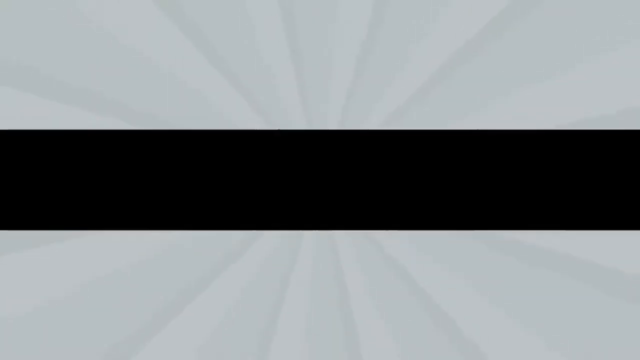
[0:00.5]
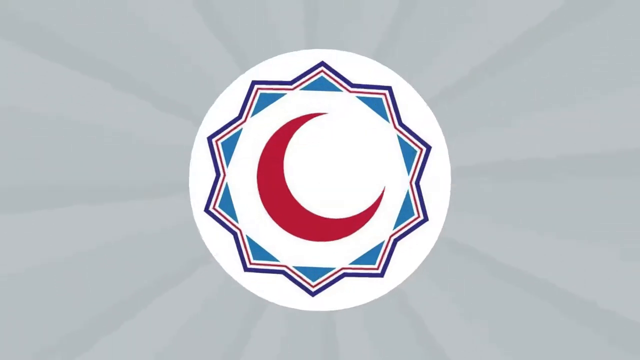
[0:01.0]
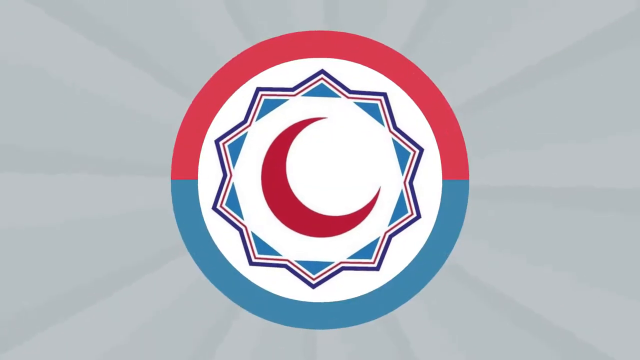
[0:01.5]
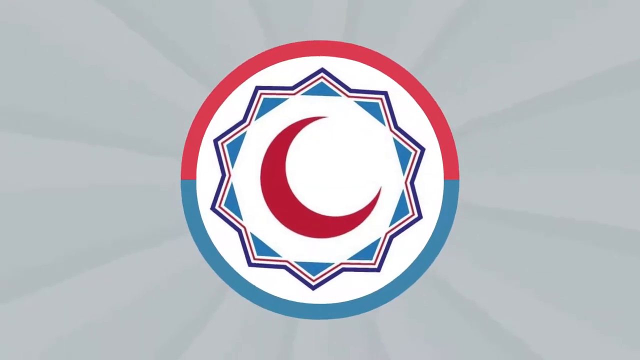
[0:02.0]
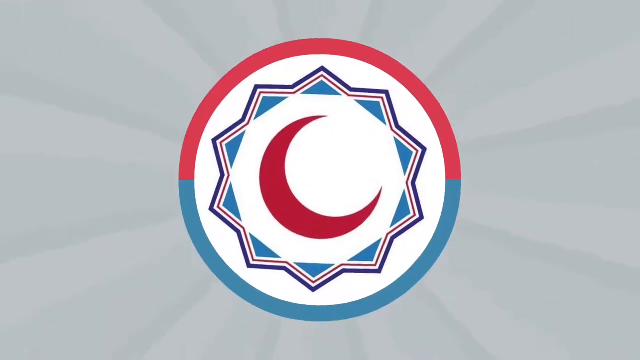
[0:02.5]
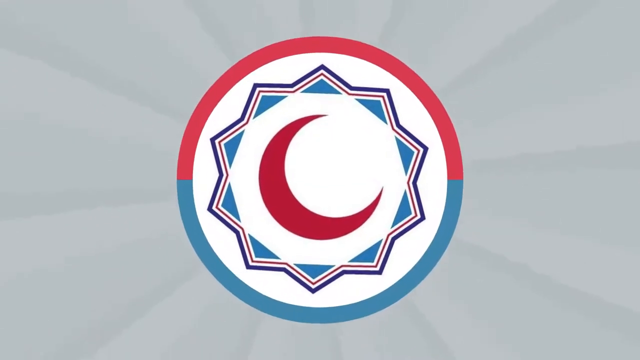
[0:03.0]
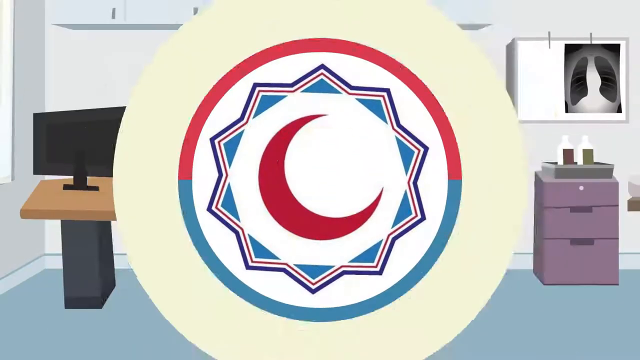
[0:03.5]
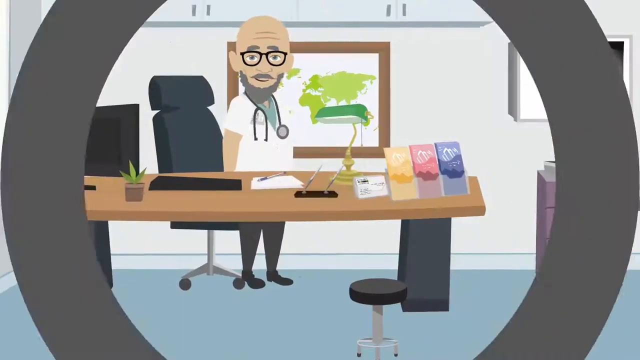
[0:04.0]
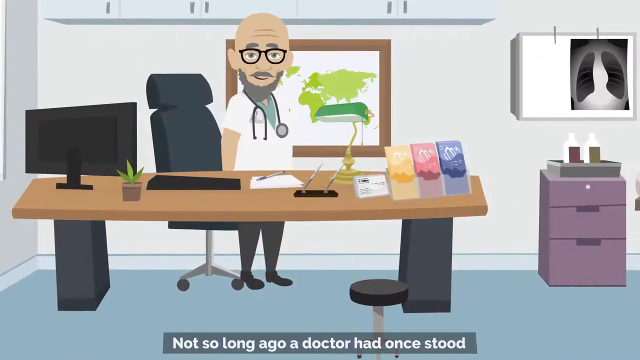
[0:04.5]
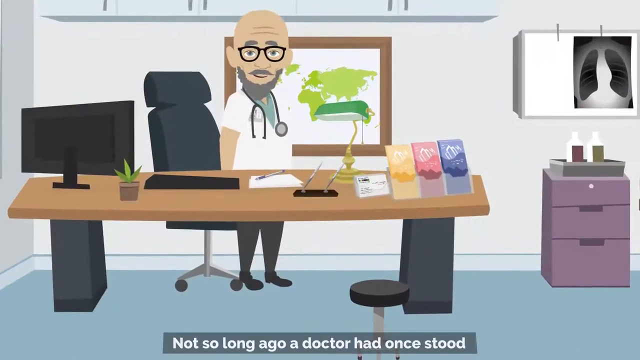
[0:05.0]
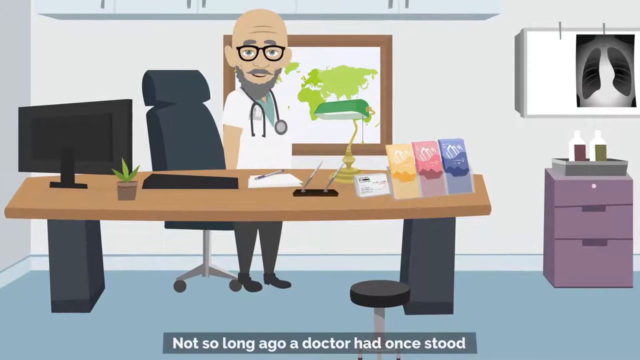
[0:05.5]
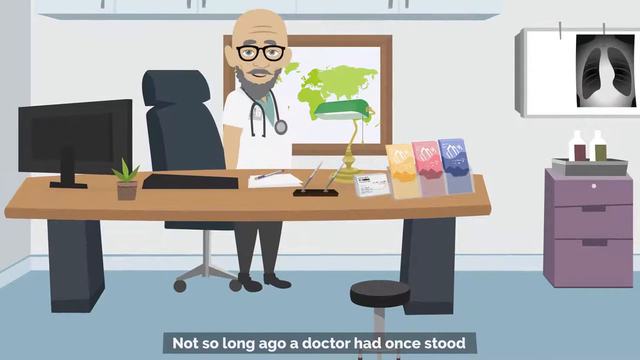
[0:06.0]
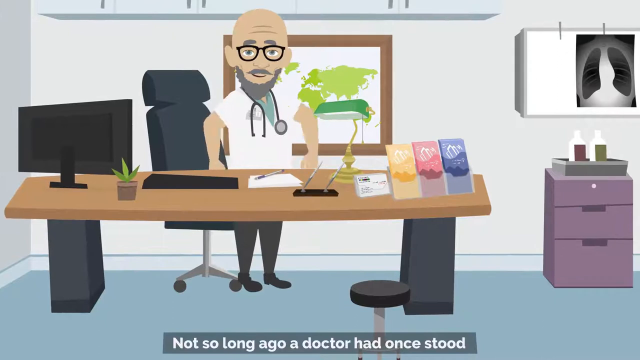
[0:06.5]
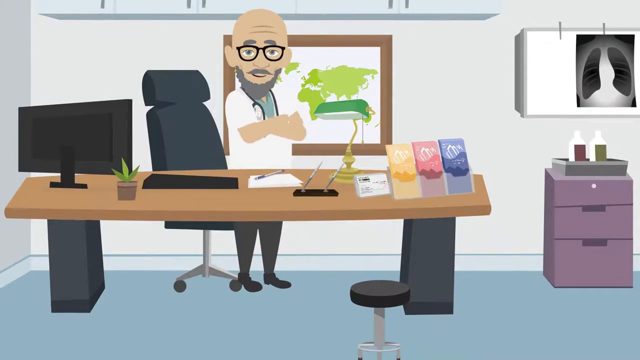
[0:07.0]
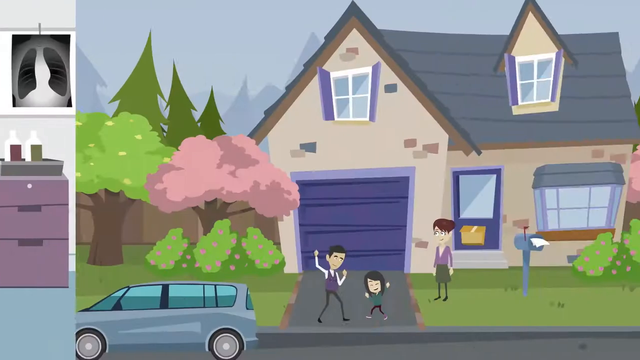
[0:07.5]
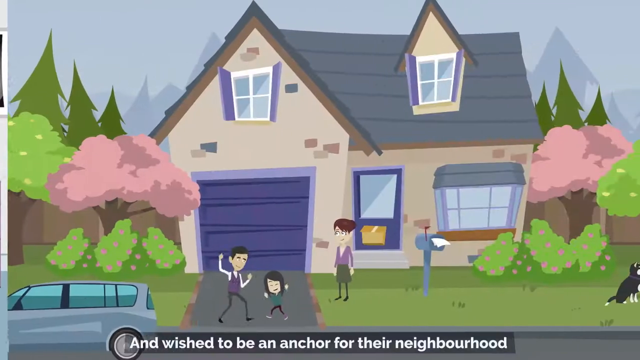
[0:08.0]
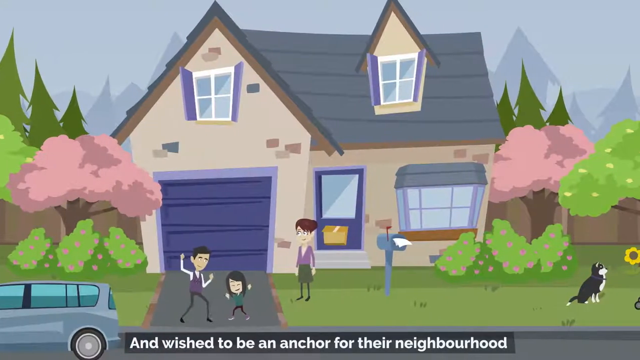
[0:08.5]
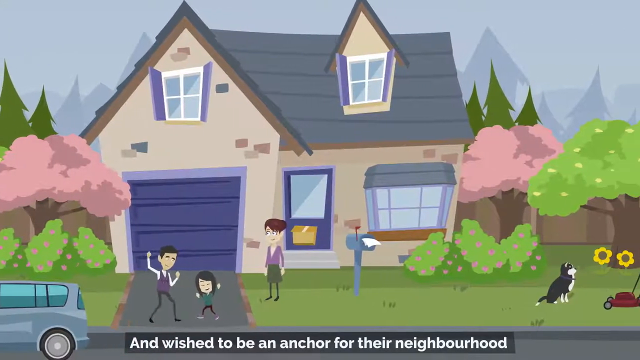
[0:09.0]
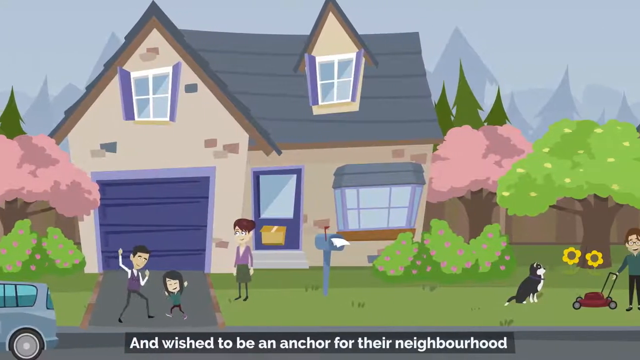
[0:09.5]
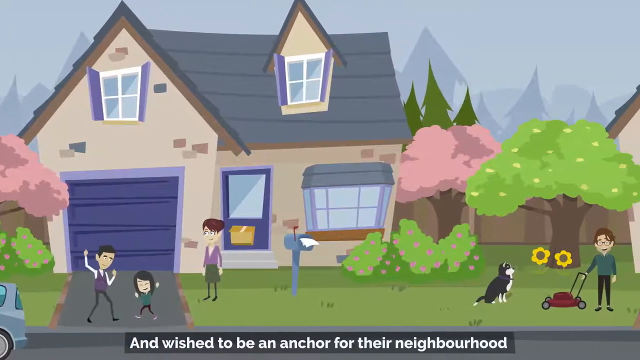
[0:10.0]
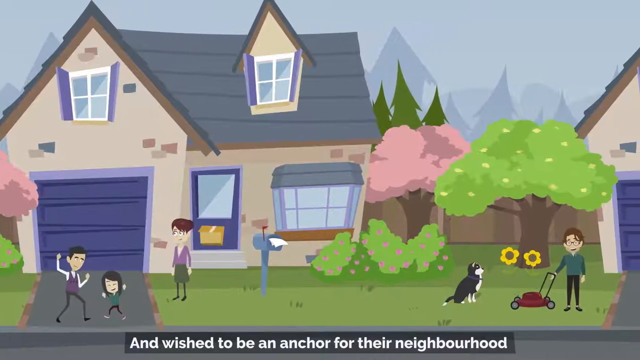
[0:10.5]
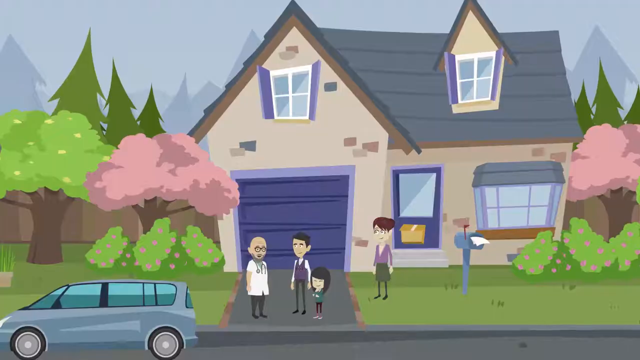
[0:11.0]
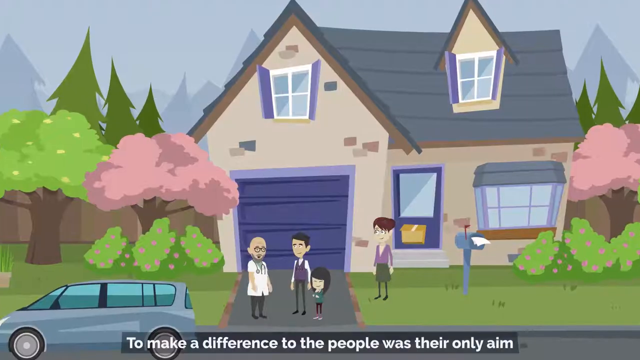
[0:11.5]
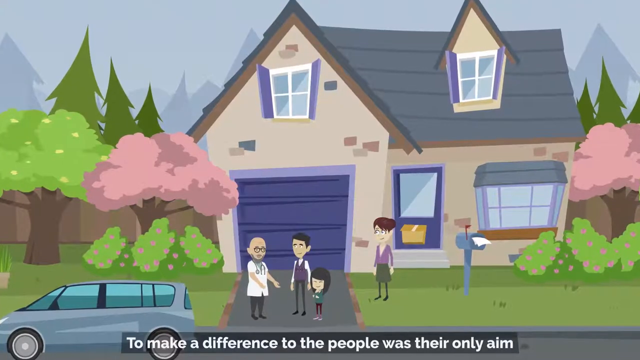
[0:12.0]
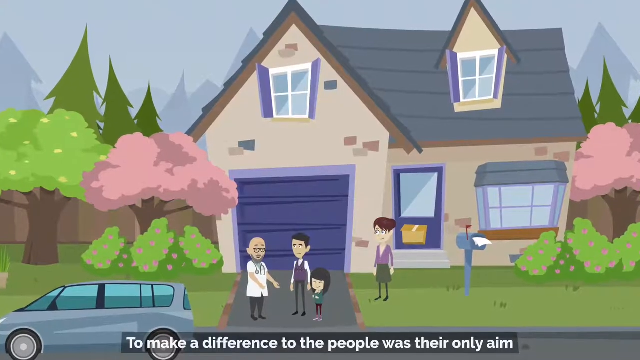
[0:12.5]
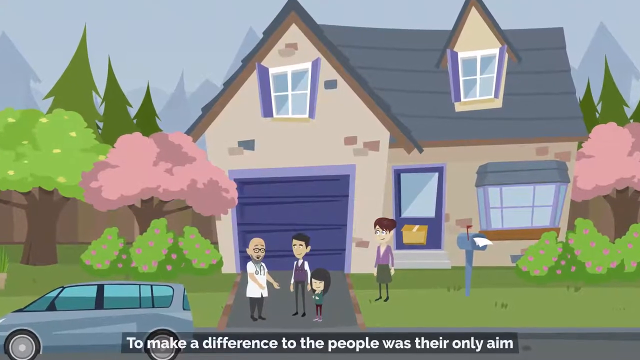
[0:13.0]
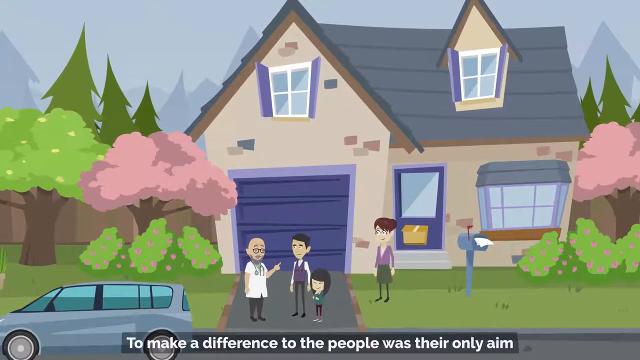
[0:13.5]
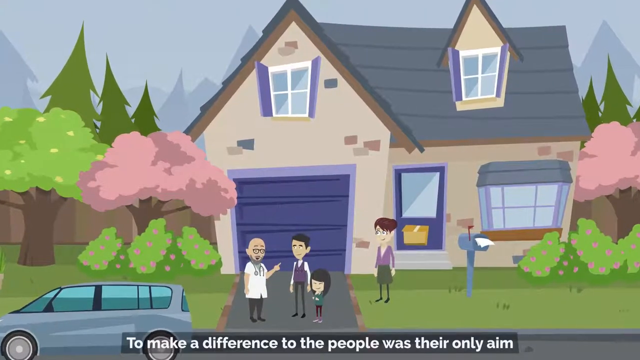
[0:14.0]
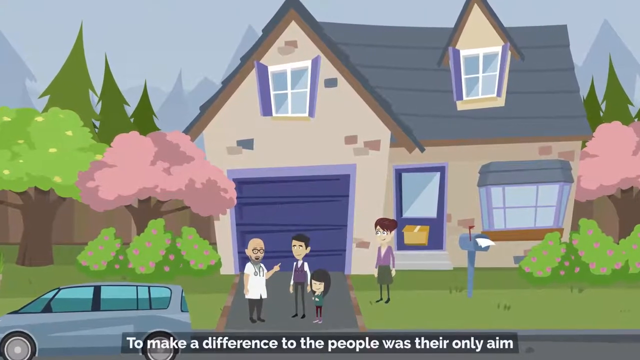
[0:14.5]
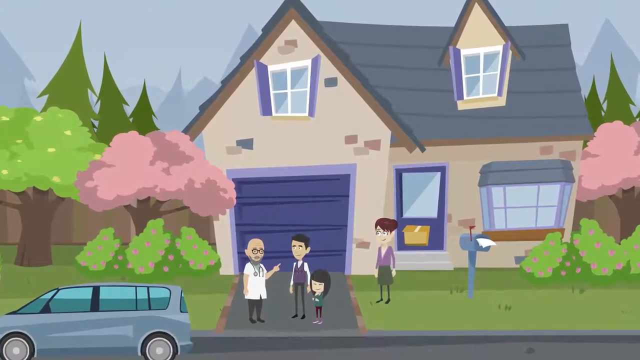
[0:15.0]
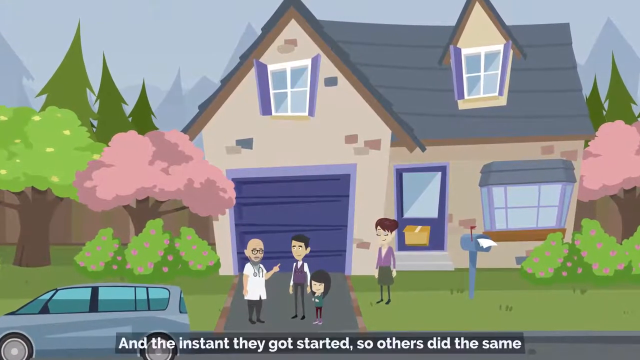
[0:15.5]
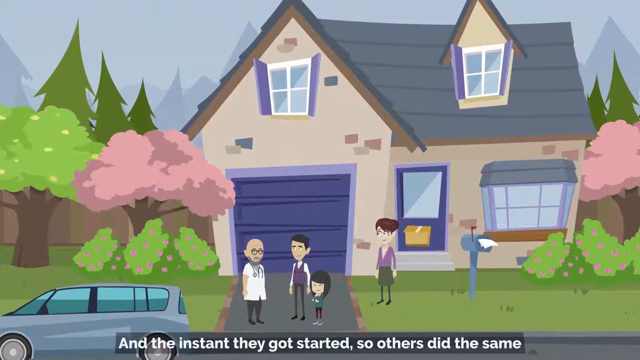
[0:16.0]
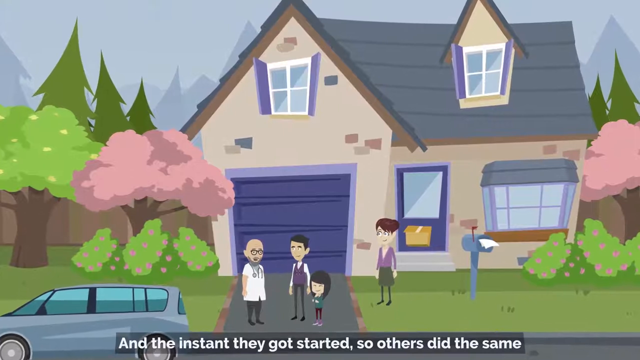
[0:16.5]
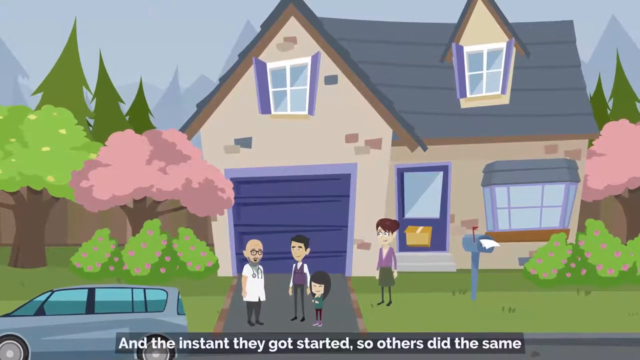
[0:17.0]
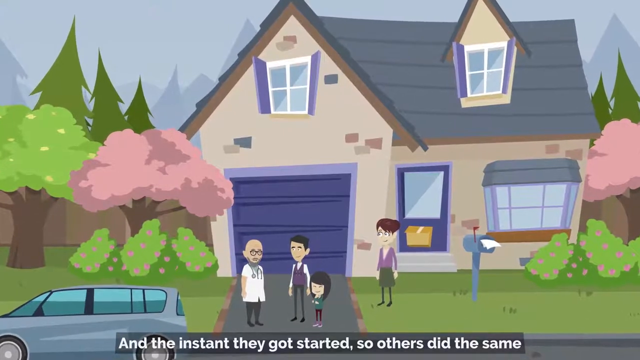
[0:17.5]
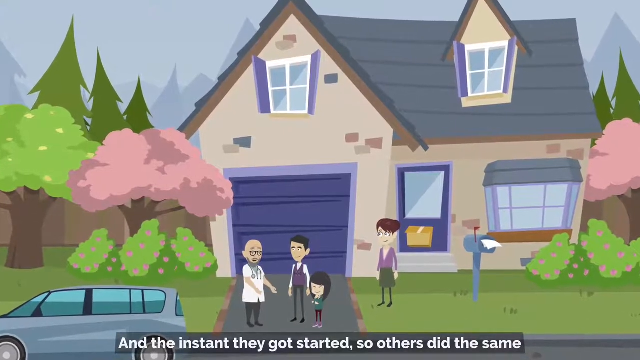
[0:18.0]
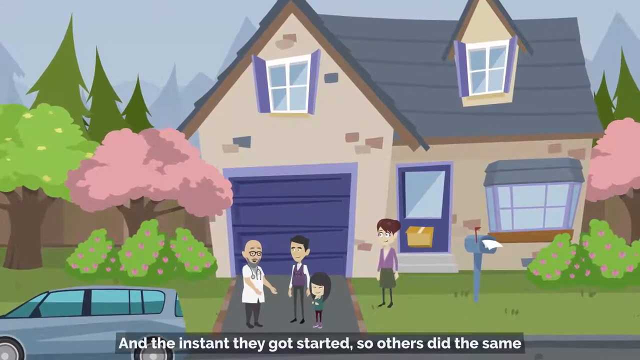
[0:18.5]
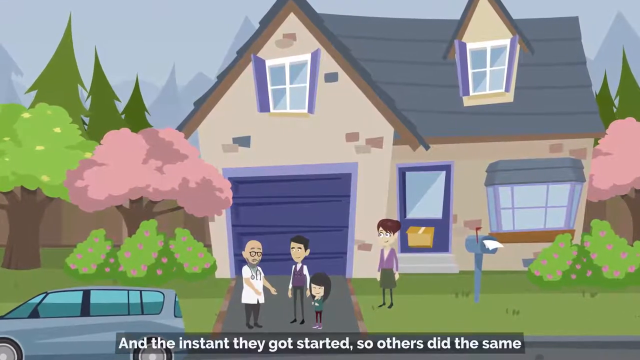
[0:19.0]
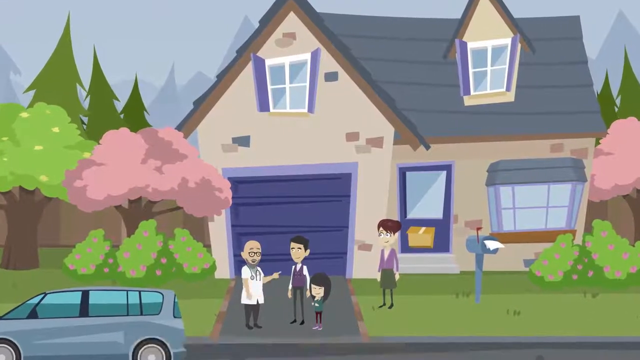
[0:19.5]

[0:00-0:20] A black background fades to an image of a red and slate blue circle. Inside the circle is a white background with a many-sided blue and red star-like figure, and an offset red crescent moon in the center of the figure. The image changes to a cartoon of a male medical provider with a short beard standing up behind a desk. Brochures are in a holder to the right of the desk. An X-ray shows on a light against a wall in the upper right, and below the X-ray is a file cabinet. The man stands on a turquoise rug. The screen then swipes left to a woman and two of her children standing before a brick suburban house in a tree-lined area, on a verdant green lawn. The camera pans to the right, briefly showing the husband mowing the lawn. Then the same medical provider appears in the family's driveway talking to the husband, who has apparently put his lawnmower aside and is standing next to his daughter, listening to the doctor speak to him.